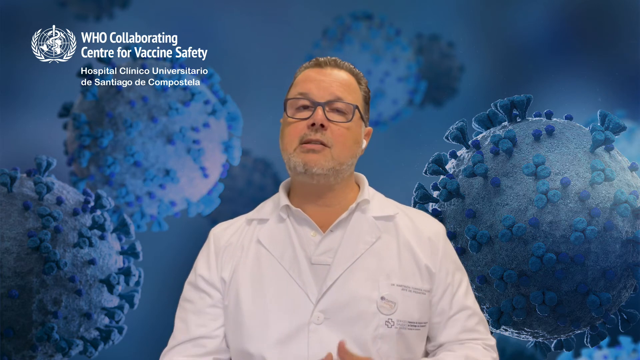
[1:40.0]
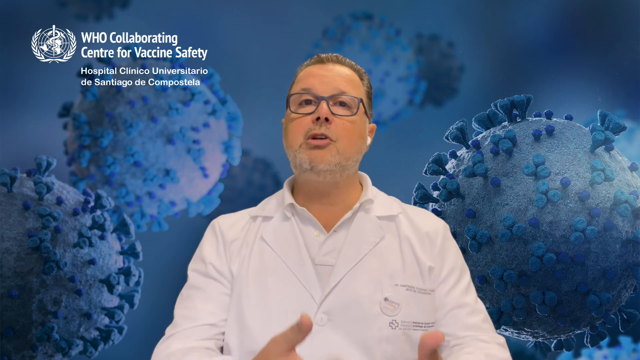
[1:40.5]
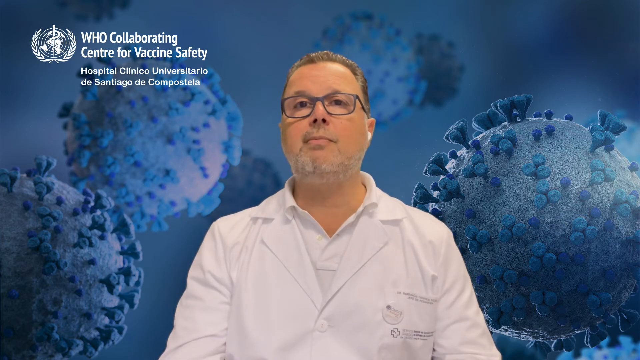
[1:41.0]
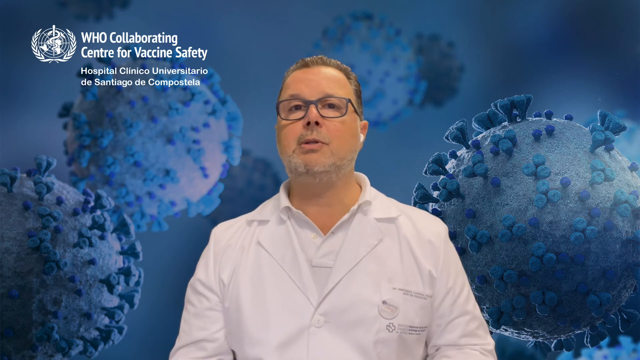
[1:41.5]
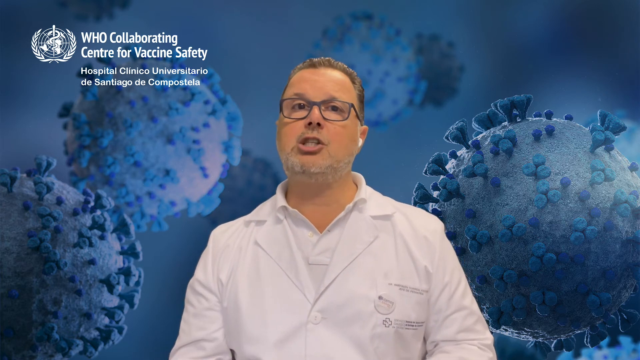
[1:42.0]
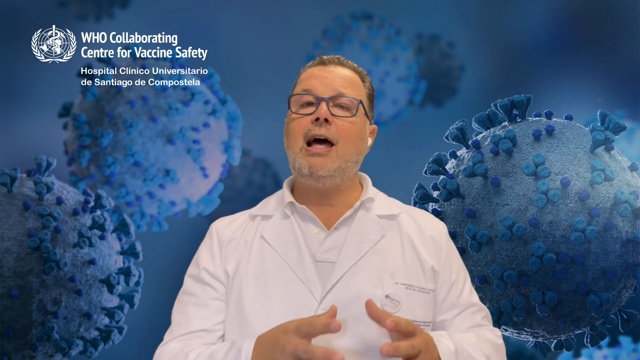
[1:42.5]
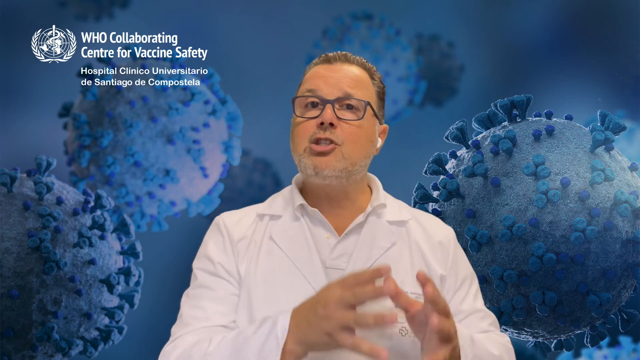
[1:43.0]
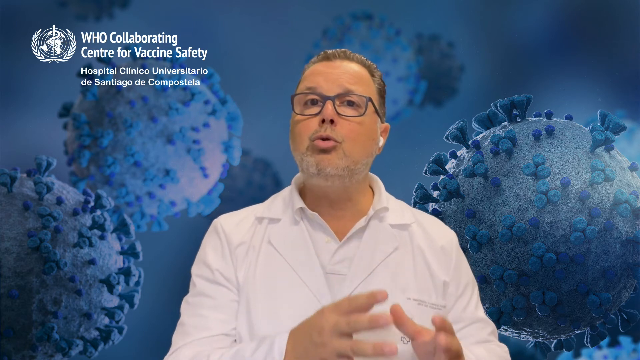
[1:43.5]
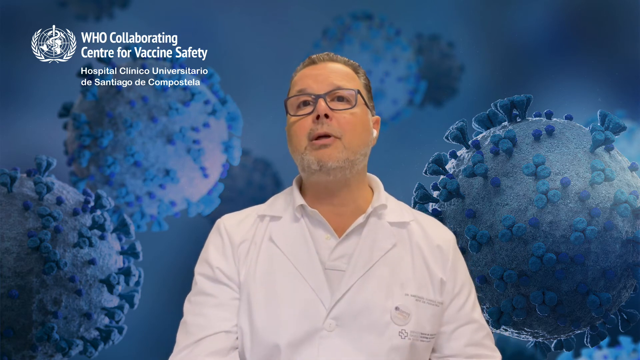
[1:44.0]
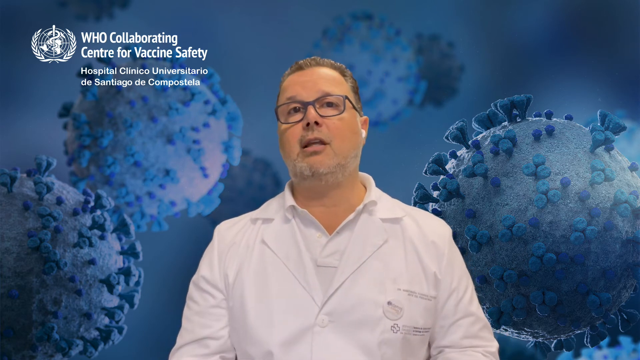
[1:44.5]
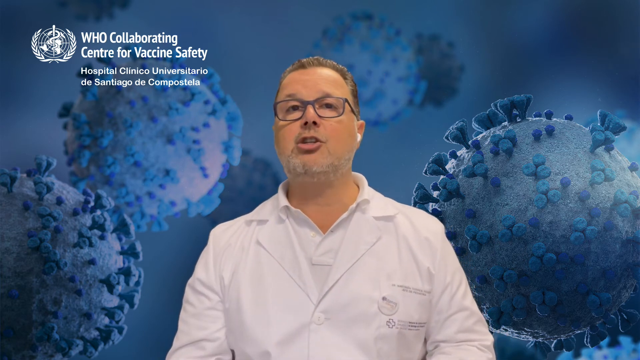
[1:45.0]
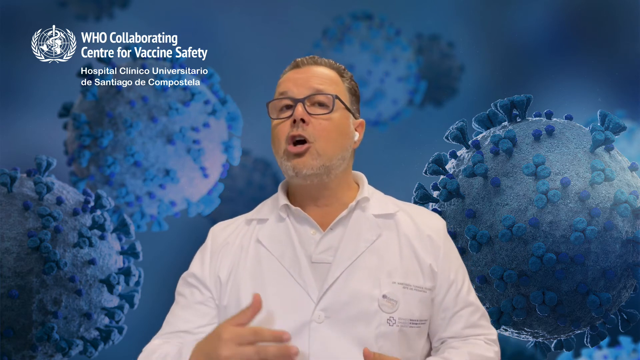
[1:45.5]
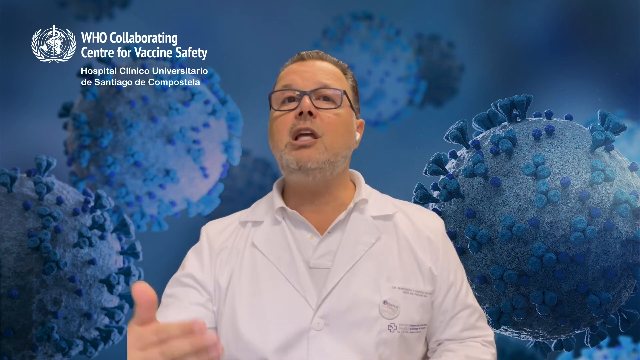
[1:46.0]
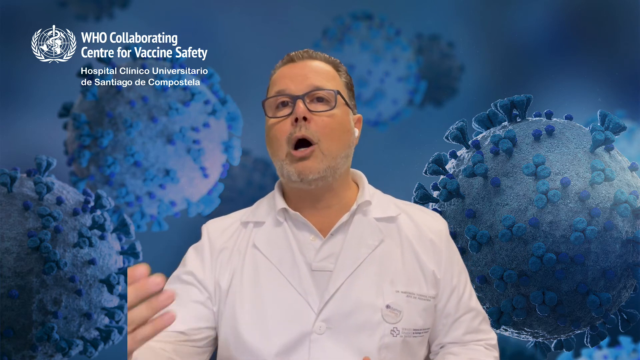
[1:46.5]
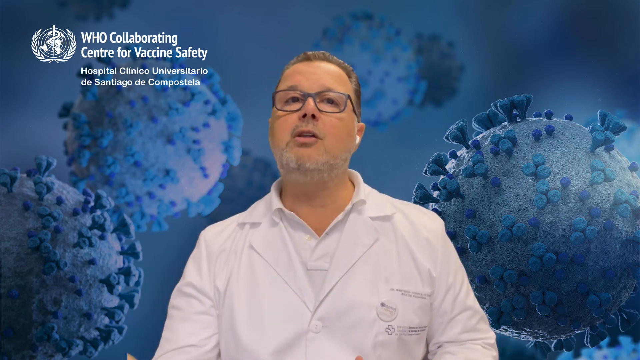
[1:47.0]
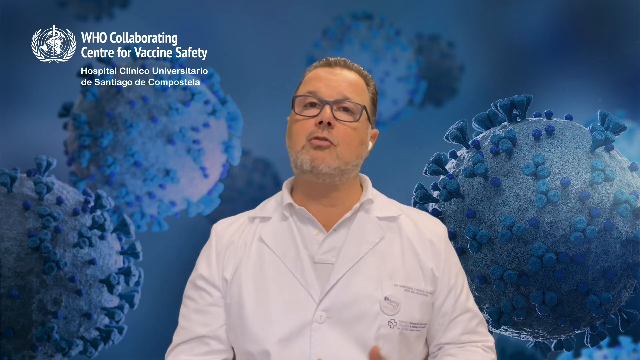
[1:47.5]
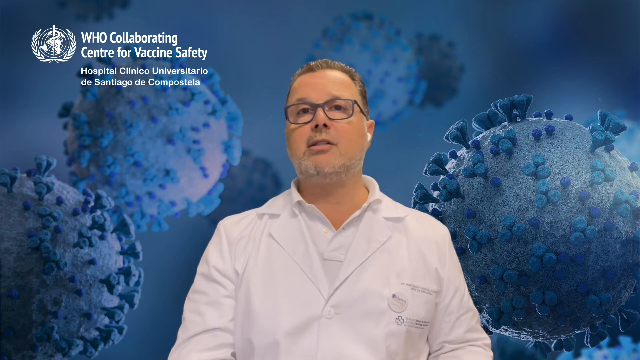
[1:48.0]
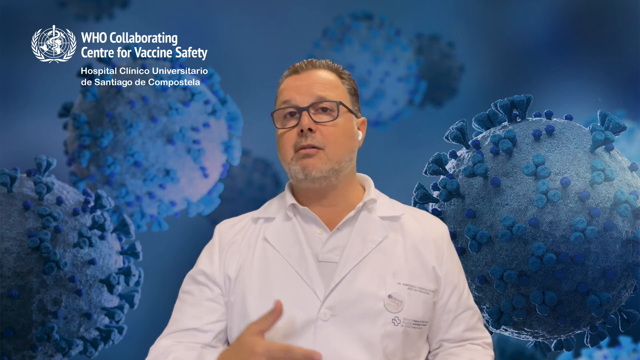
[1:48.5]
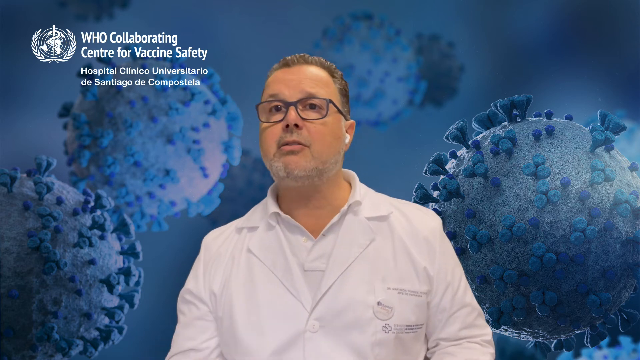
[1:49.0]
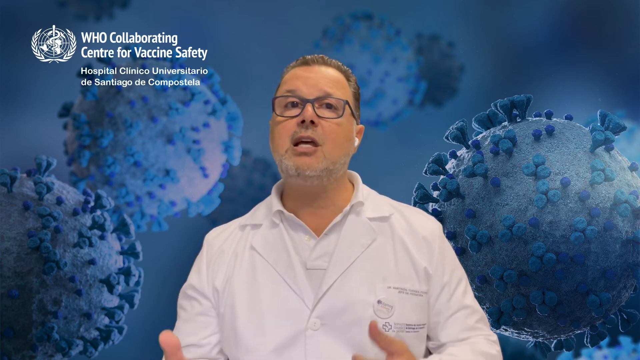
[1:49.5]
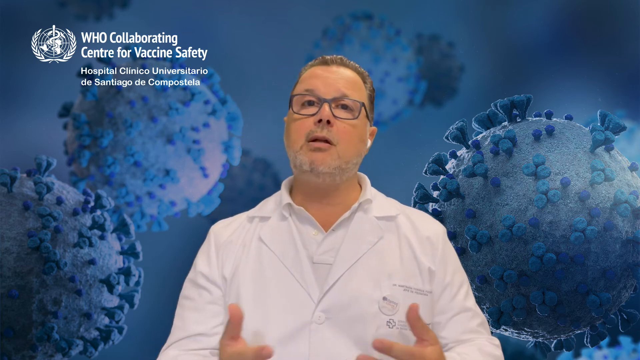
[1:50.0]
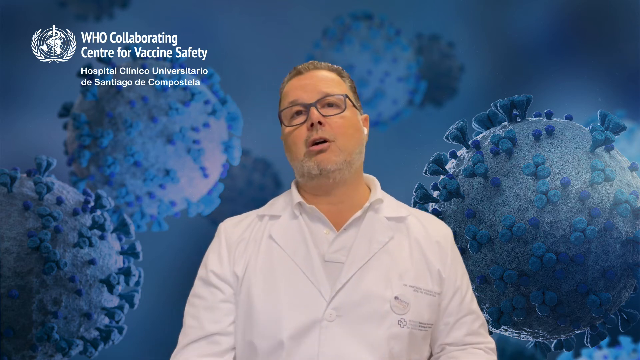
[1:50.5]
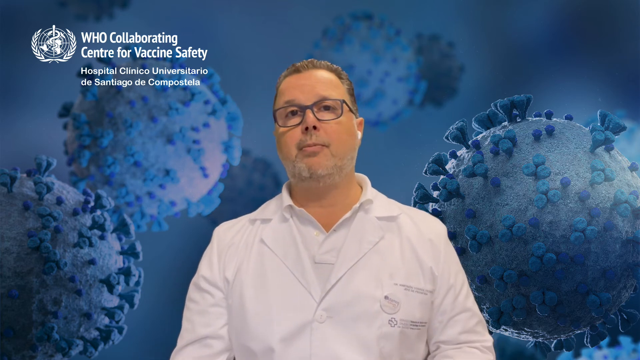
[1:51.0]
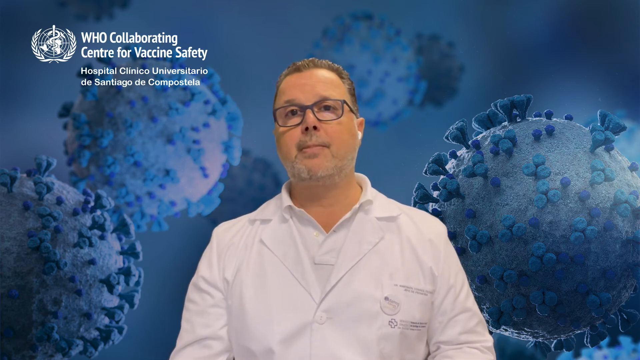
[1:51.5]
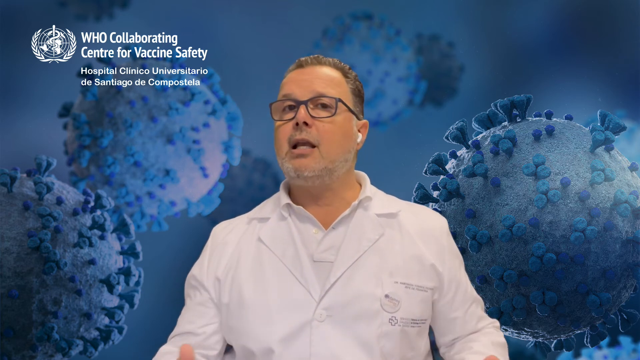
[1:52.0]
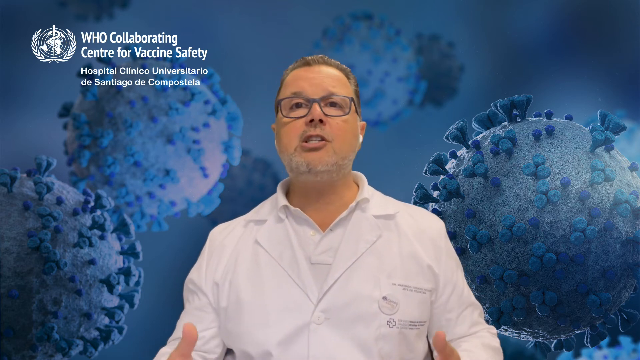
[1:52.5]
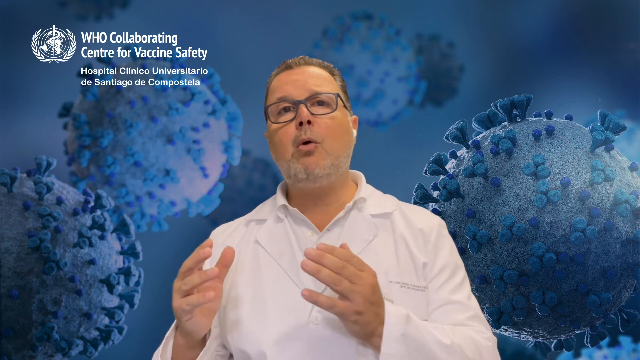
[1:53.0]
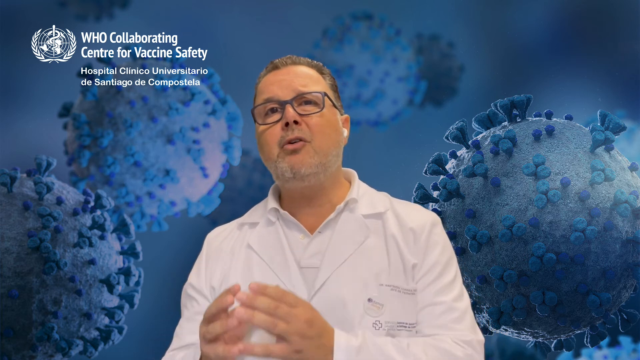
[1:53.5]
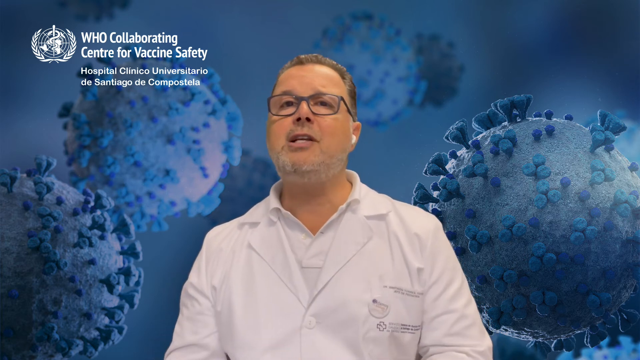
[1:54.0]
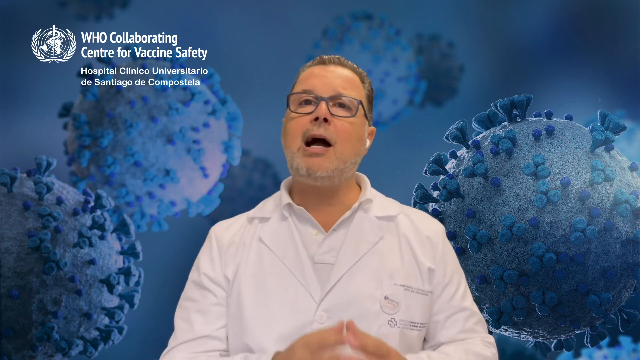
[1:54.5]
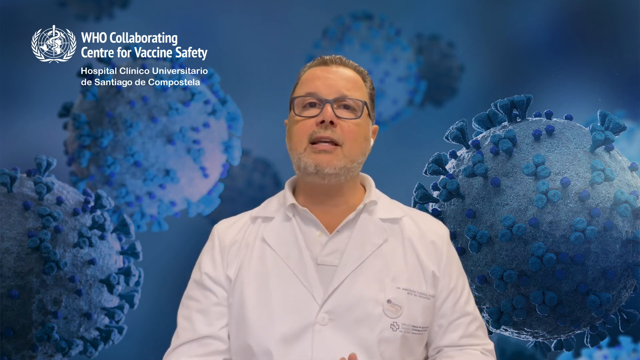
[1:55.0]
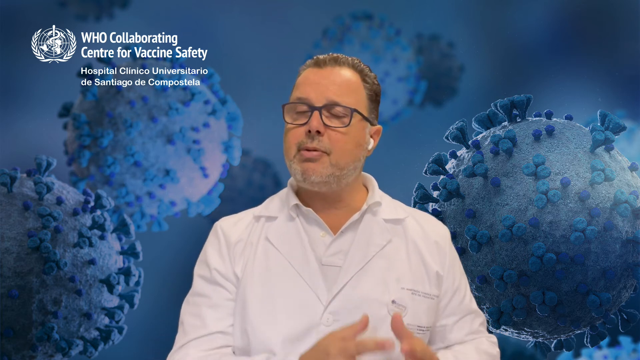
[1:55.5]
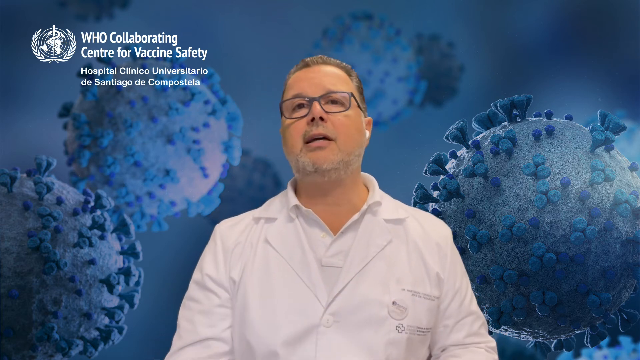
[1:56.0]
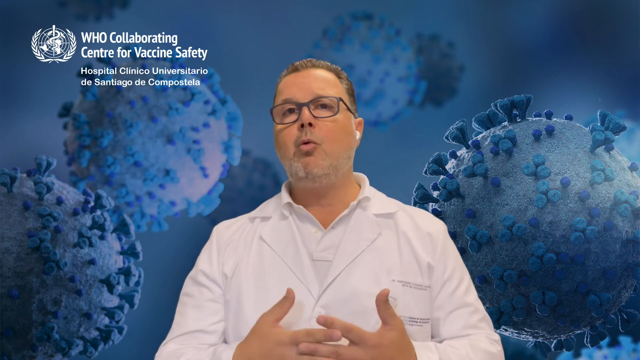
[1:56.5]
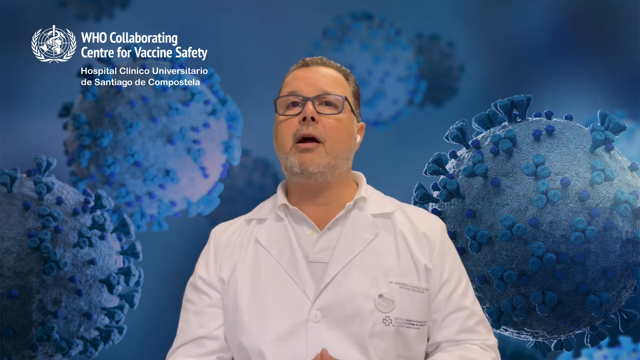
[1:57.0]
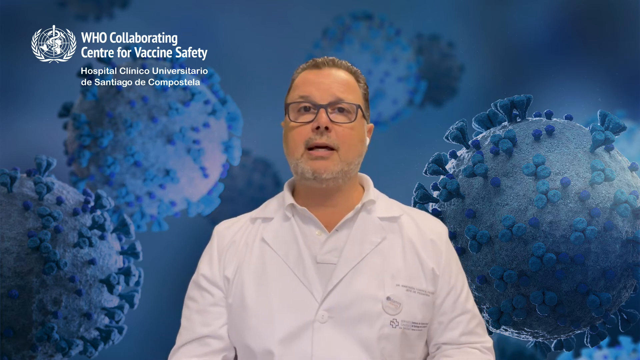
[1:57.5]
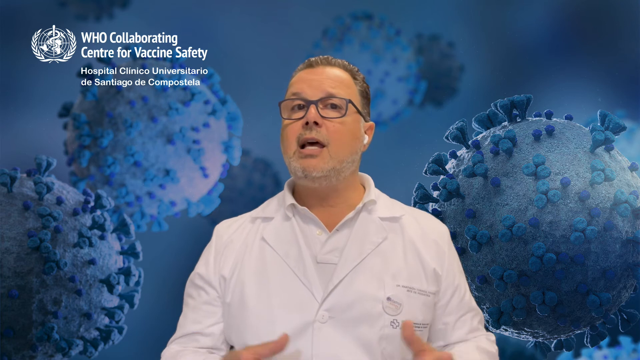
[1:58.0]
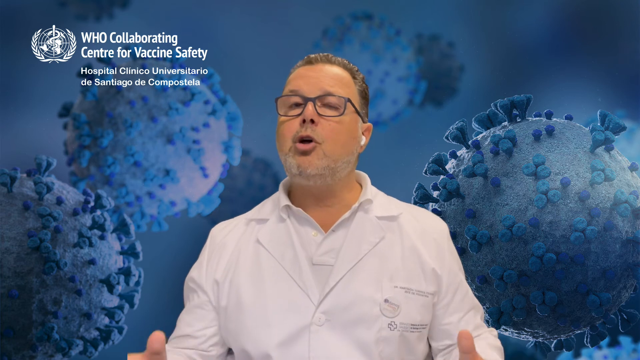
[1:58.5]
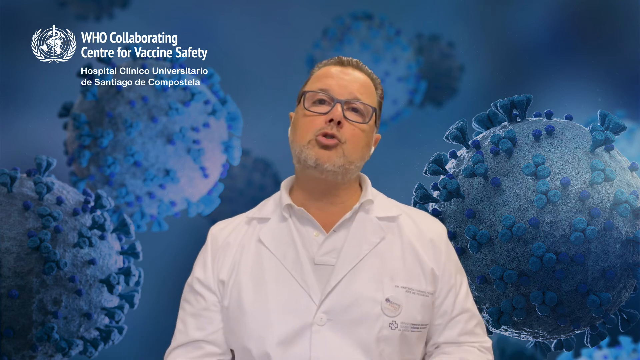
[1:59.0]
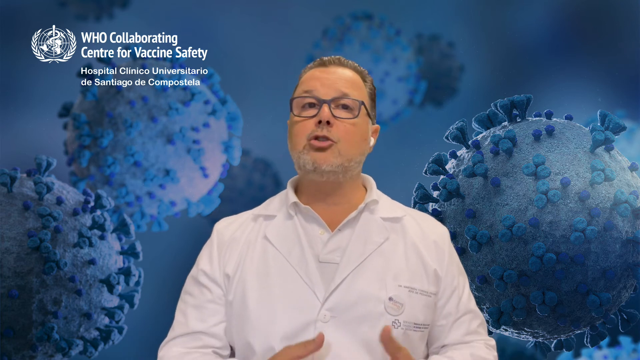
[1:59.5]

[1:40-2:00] The background is a blurry blue, with eight spherical objects that are supposed to be viruses spread throughout it. In the upper left is a white symbol, with the white text "WHO Collaborating Center for Vaccine Safety" to its right and, beneath that in smaller white text, "Hospital Clinico Universitario de Santiago de Compostela". In the center is a man wearing a white lab coat, a white shirt, two white plastic pieces with one in each ear, and black glasses, facing the viewer. He speaks and raises his hands up together. He then makes circles with his right hand, brings it back toward the center, and circles again. He brings both hands up toward his chest as he continues to speak, takes a breath, brings both hands together on his right side while speaking, and then drifts his hands back toward the center of his body.